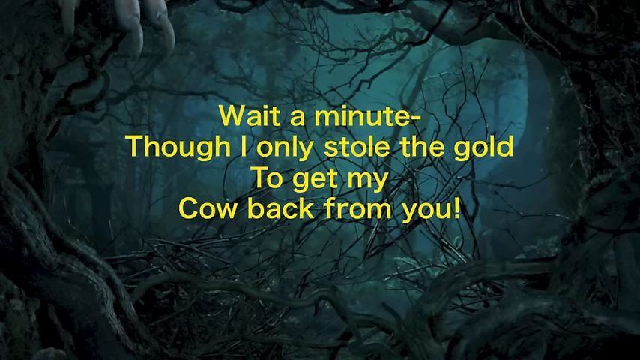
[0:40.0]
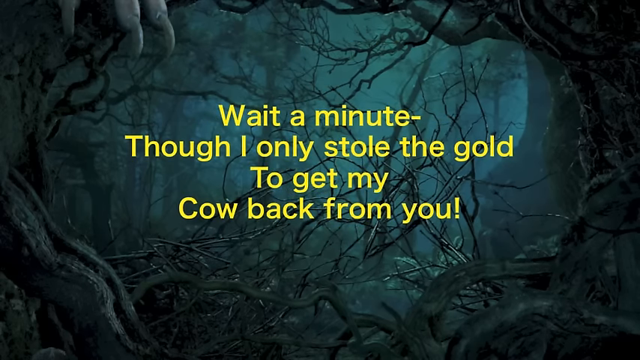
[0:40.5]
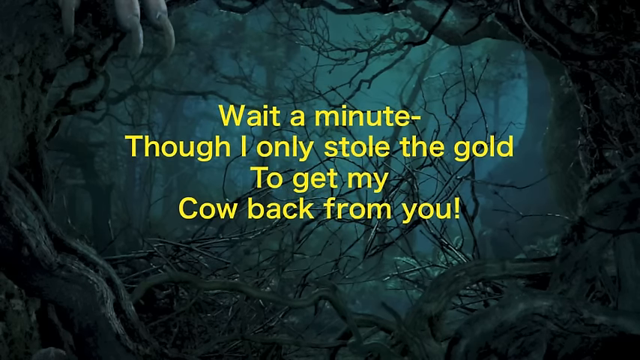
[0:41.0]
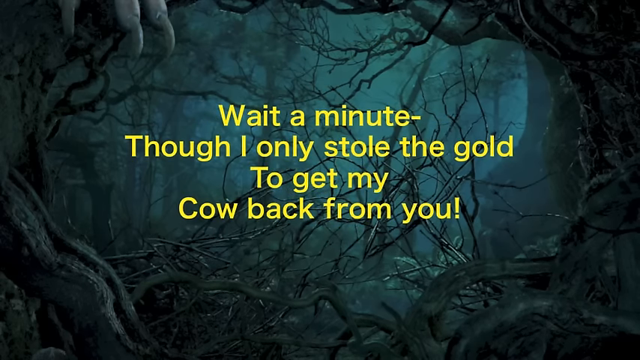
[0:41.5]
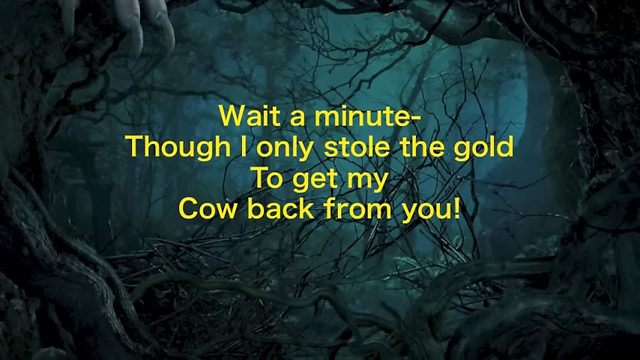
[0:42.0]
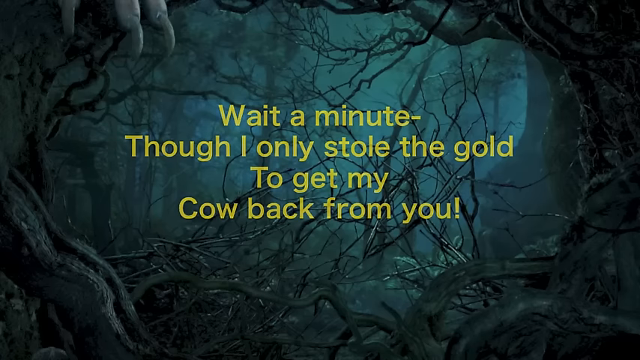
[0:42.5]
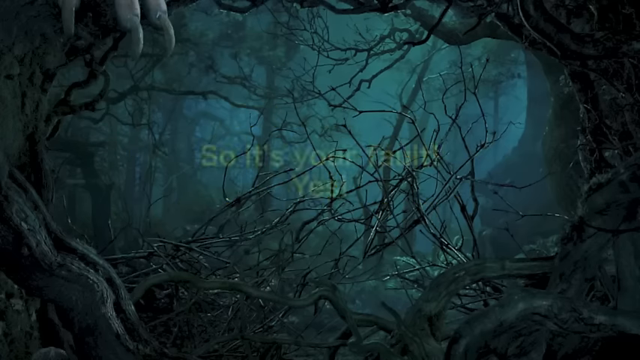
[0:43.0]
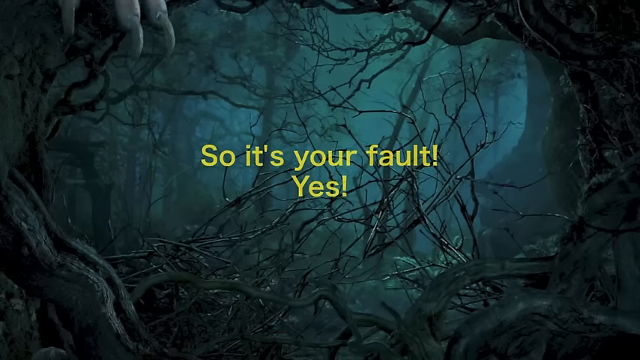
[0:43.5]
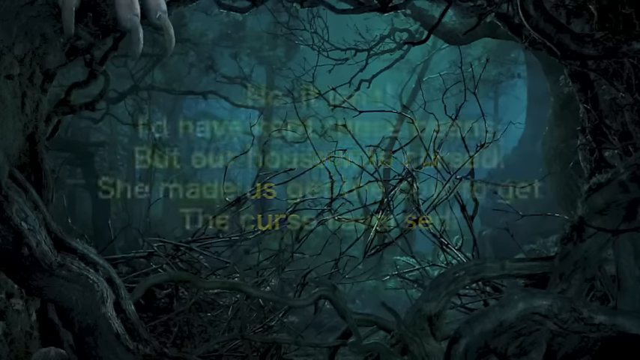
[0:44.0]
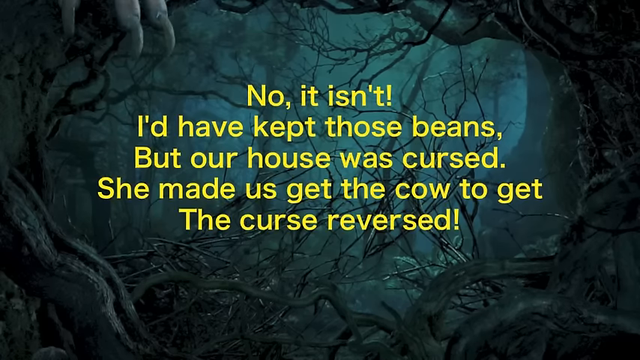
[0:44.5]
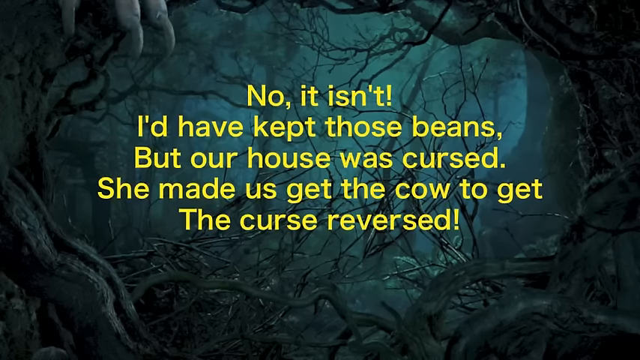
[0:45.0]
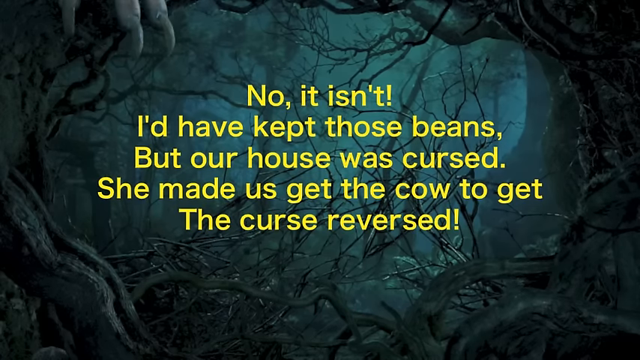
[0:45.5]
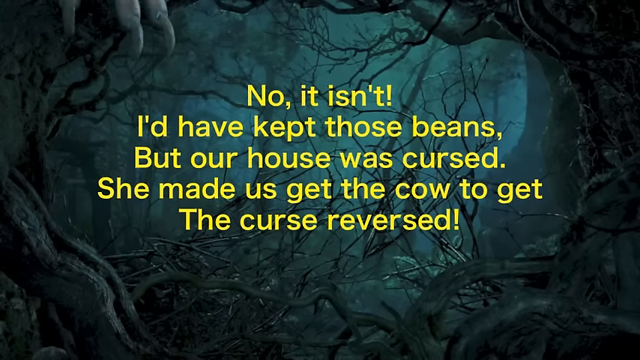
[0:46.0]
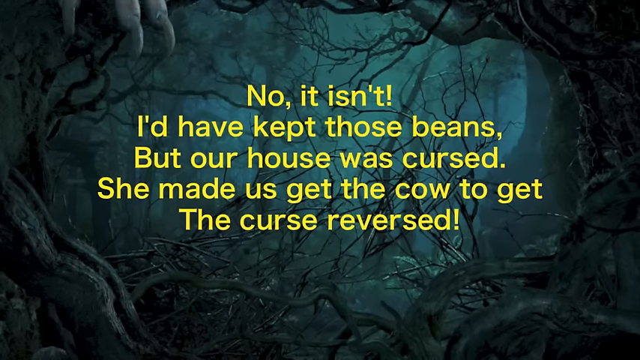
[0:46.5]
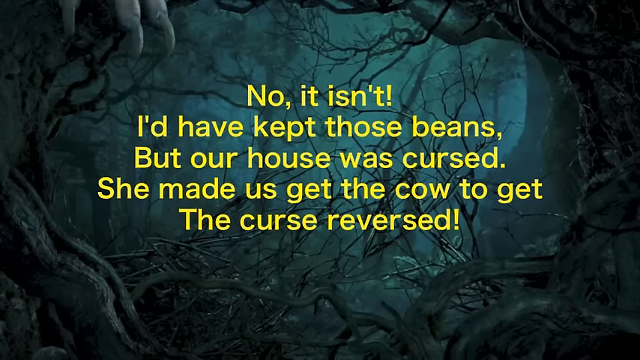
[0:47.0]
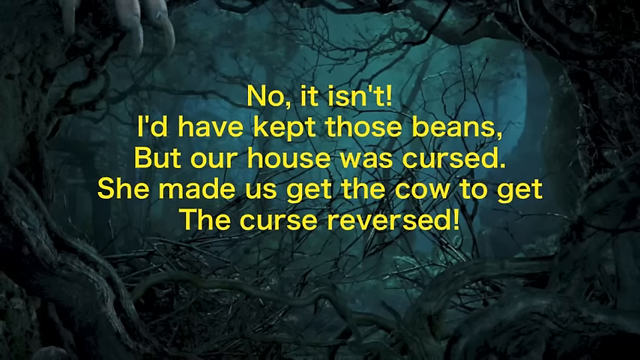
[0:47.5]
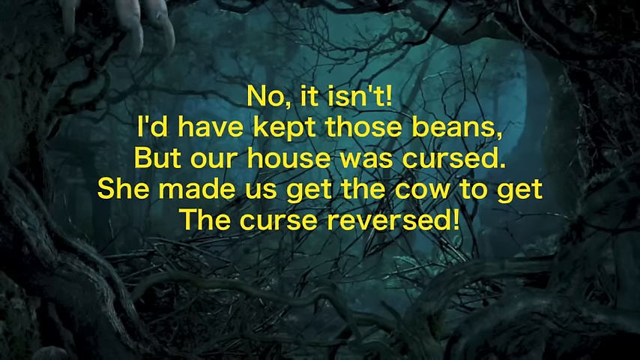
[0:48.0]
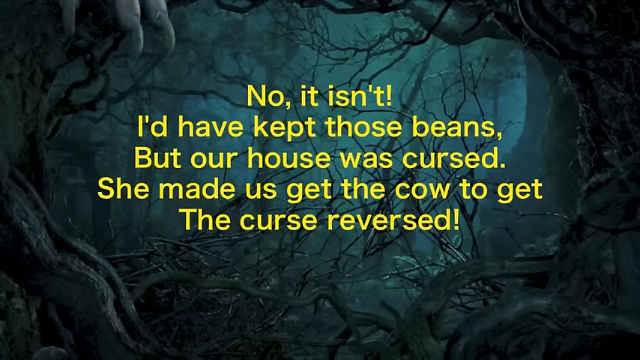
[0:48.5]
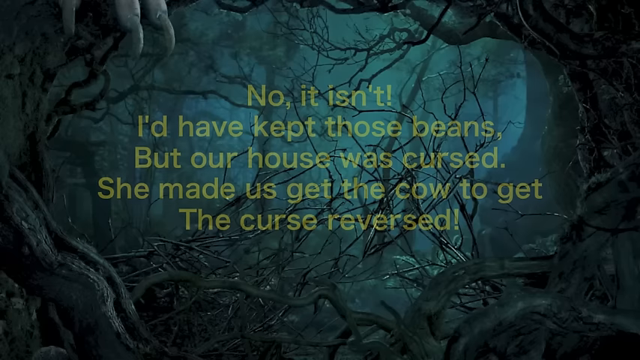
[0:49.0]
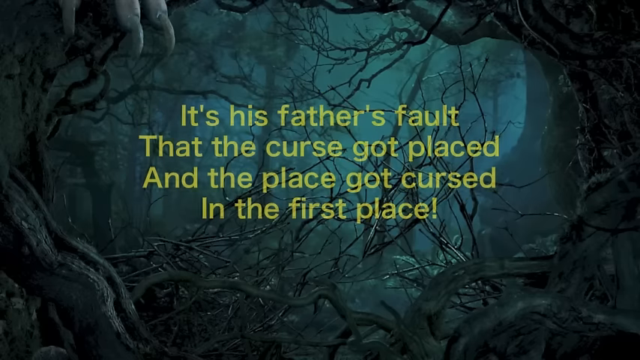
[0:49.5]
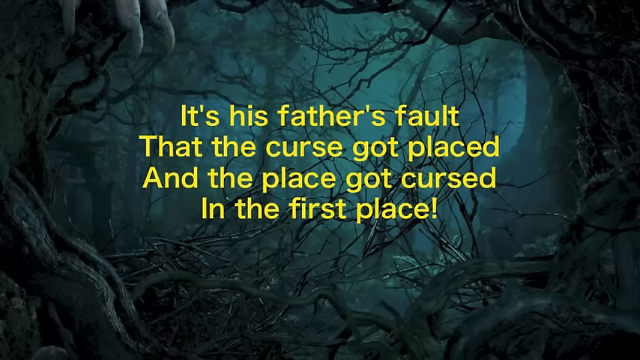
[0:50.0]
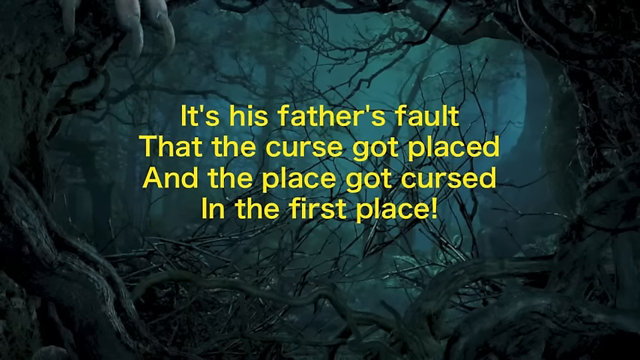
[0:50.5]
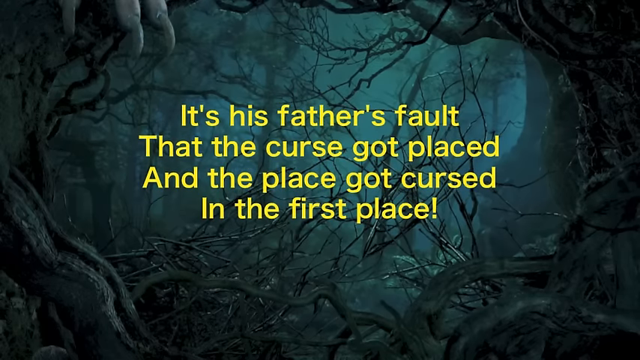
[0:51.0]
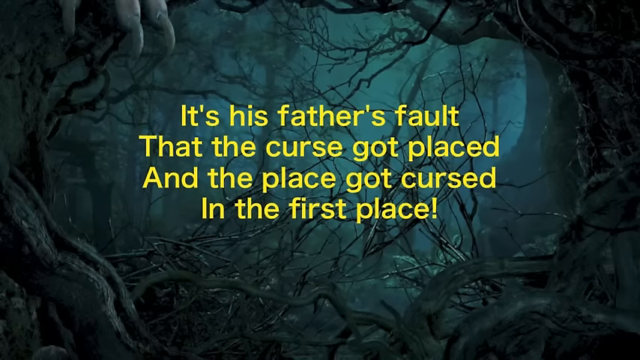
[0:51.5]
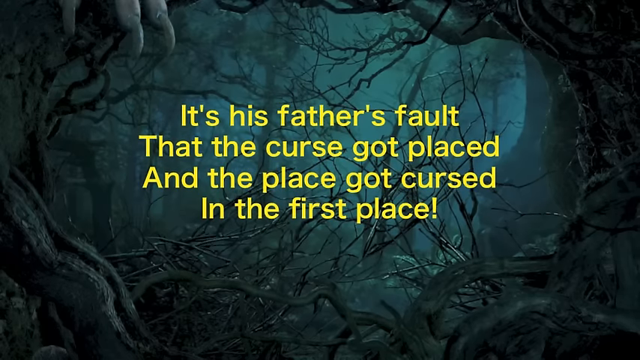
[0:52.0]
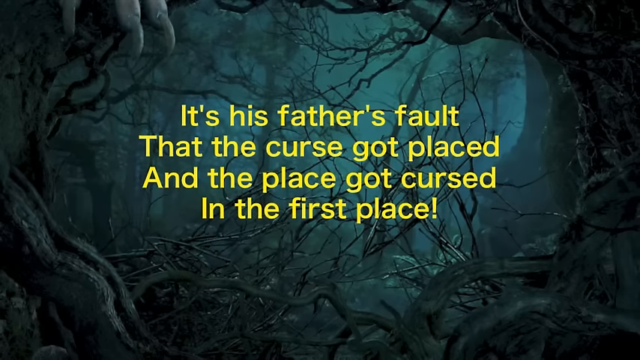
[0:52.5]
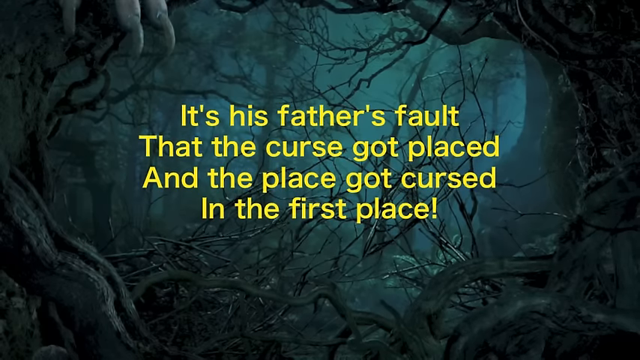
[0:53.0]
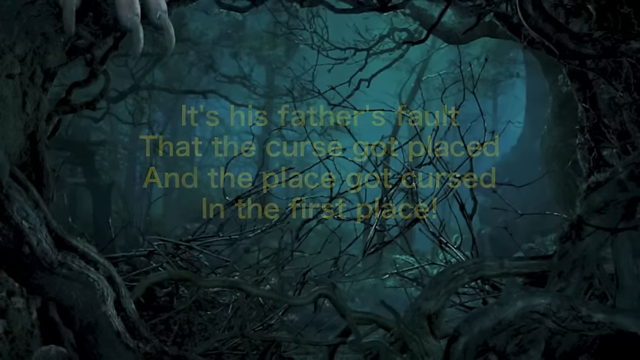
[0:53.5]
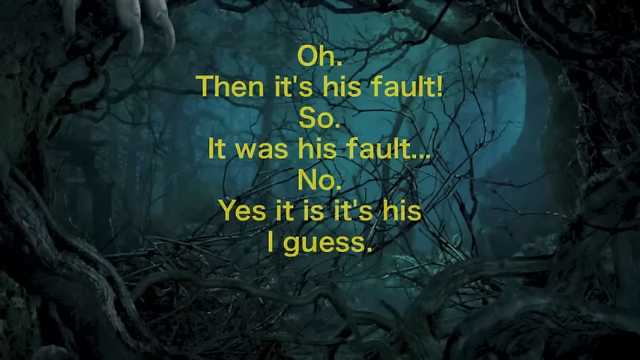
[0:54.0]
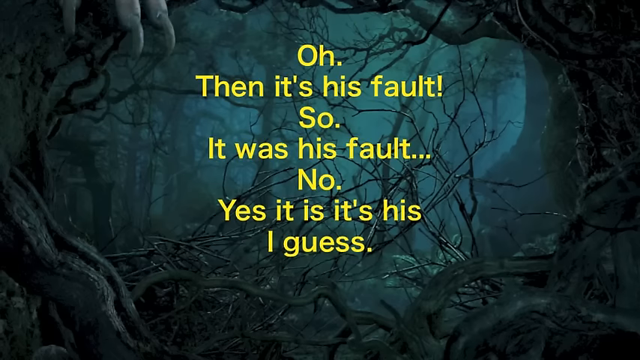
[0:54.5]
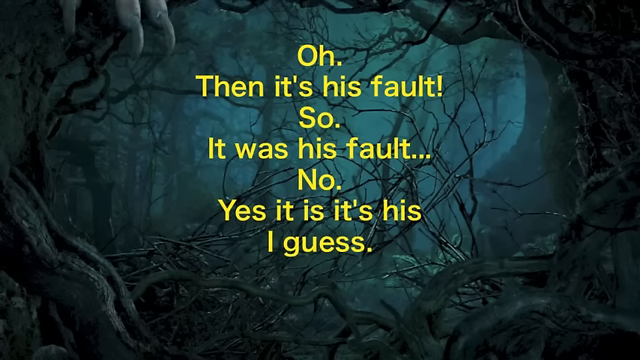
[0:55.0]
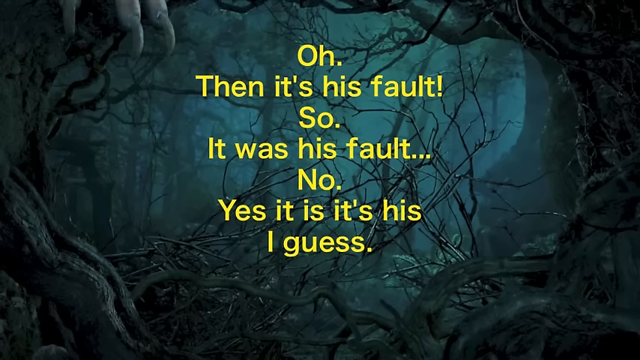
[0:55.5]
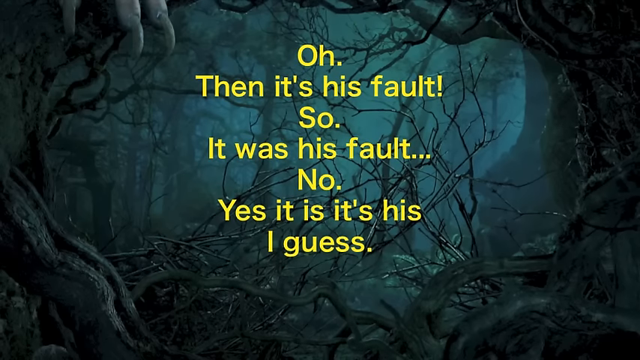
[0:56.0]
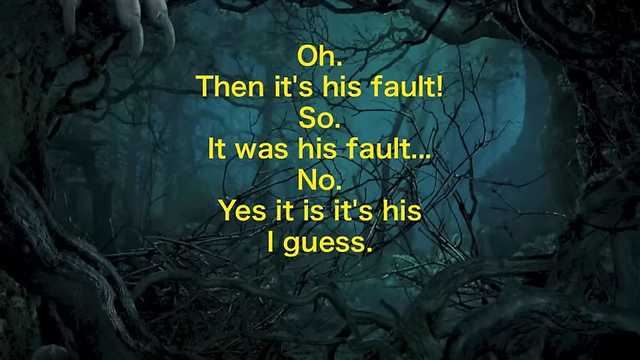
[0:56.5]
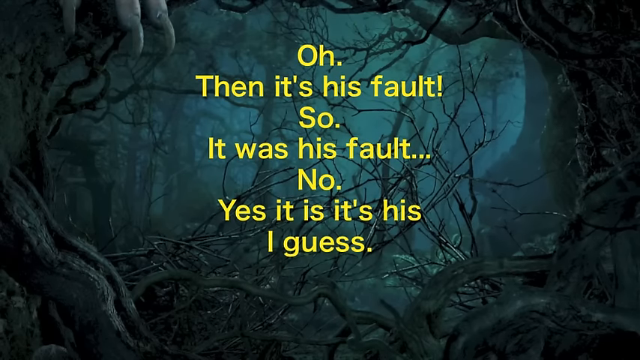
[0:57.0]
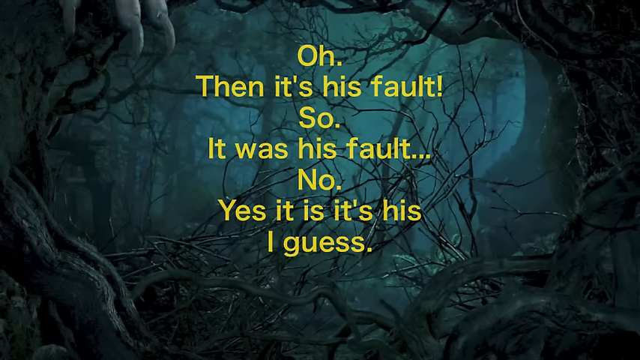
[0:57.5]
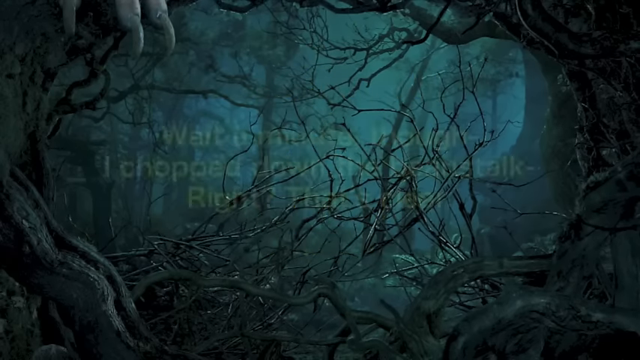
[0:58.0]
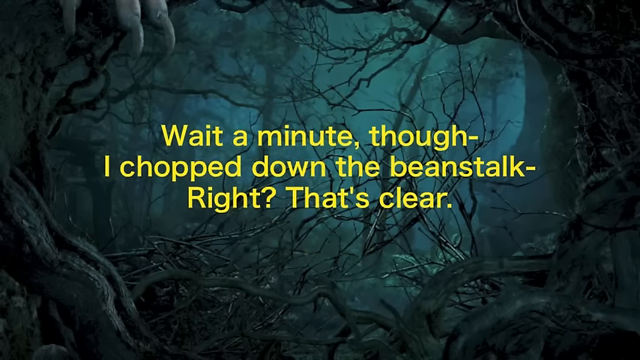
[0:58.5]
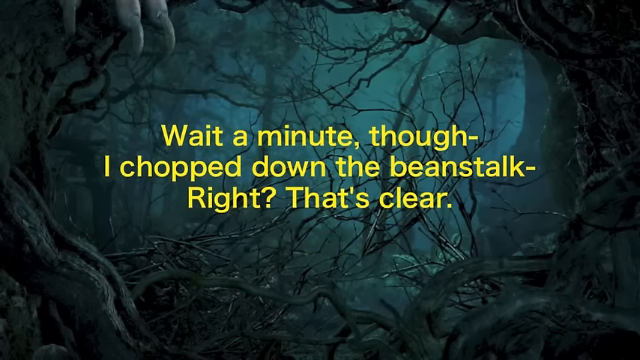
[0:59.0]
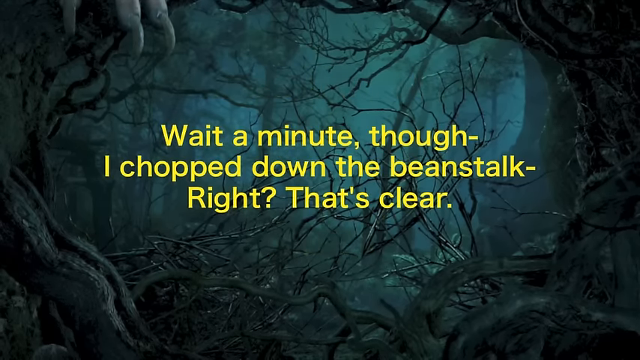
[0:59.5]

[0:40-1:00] The same static forest image continues as the background, unchanged. Yellow text reads "Wait a minute, though I only stole the gold to get my cow back from you." That text fades away and is replaced by "So yes, it is your fault." The next group of text reads "No, it isn't. I'd have kept those beans, but our house was cursed. She made us get the cow to get the curse reversed." Then comes "It's his father's fault that the curse got placed and the place got cursed in the first place.", followed by "Oh then it's his fault. So it was his fault. No. Yes, it is his" and then "Wait a minute, though I chopped down the beanstalk, right, that's clear." The text fades away between each transition.